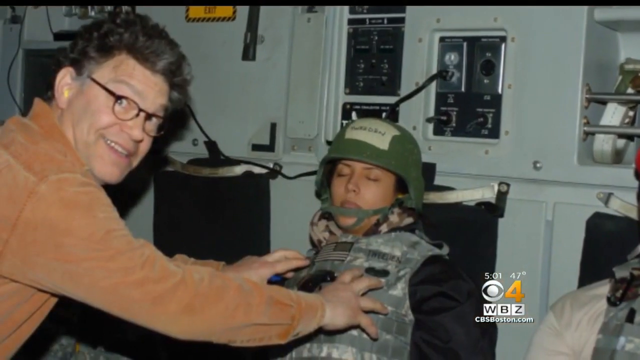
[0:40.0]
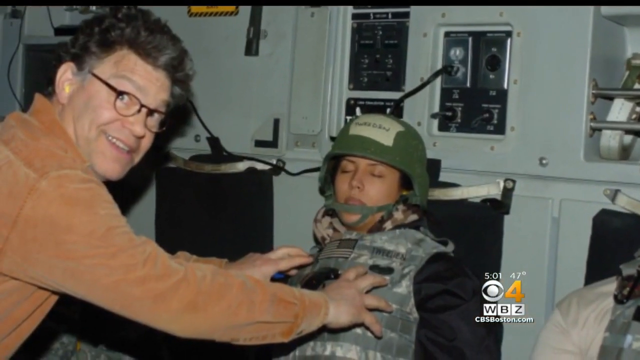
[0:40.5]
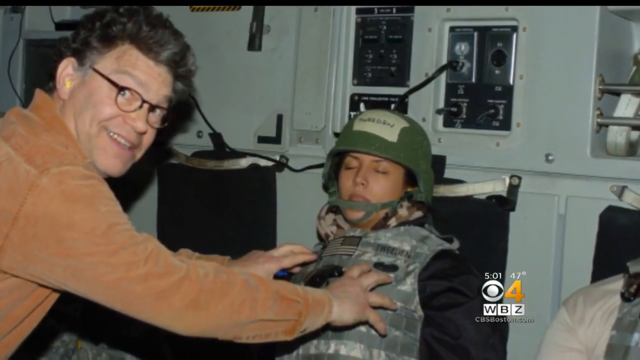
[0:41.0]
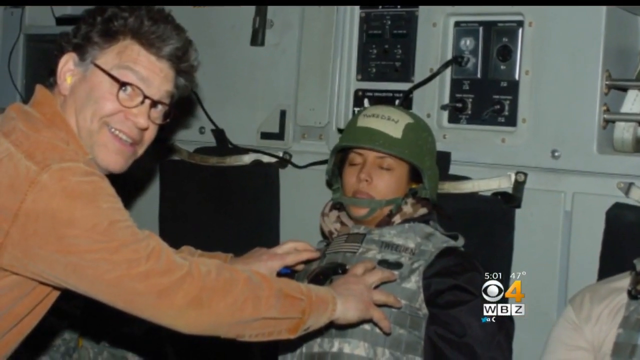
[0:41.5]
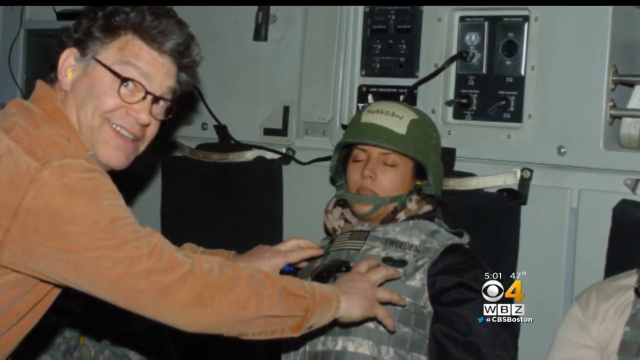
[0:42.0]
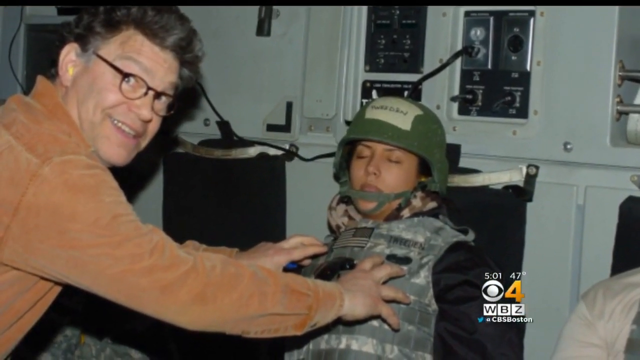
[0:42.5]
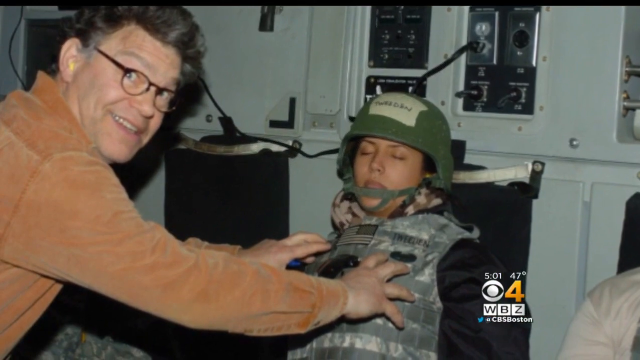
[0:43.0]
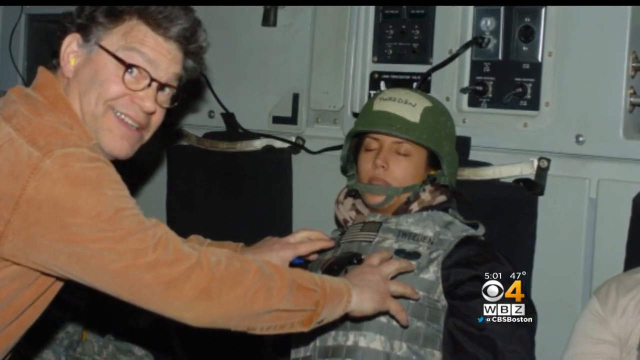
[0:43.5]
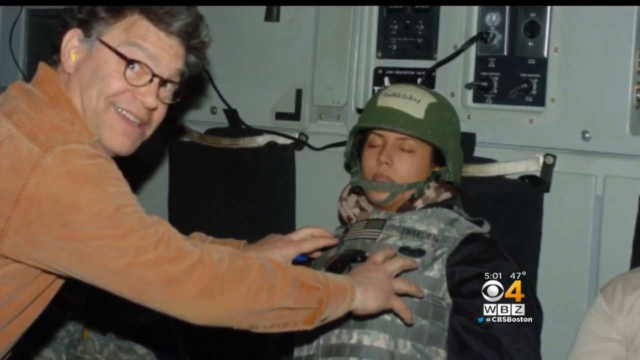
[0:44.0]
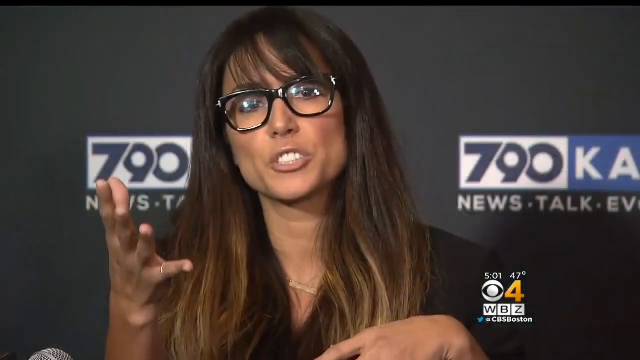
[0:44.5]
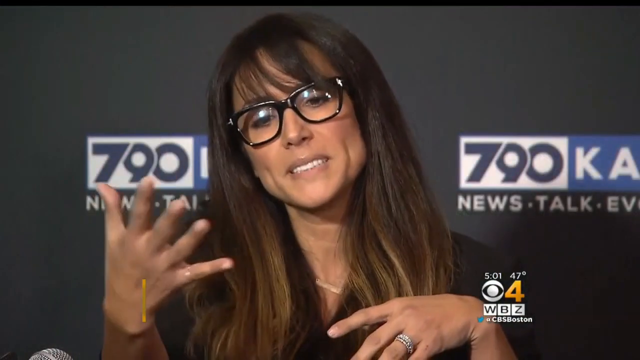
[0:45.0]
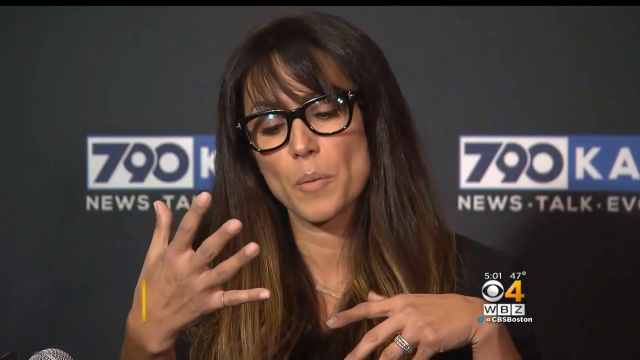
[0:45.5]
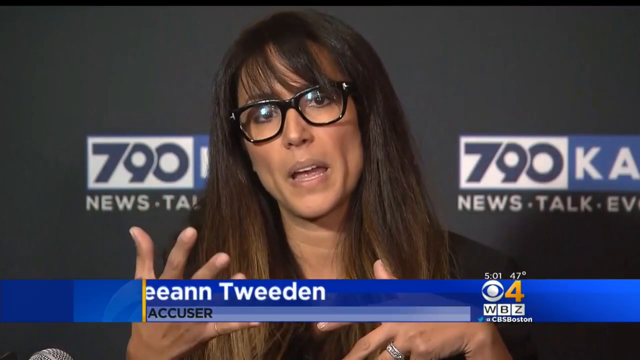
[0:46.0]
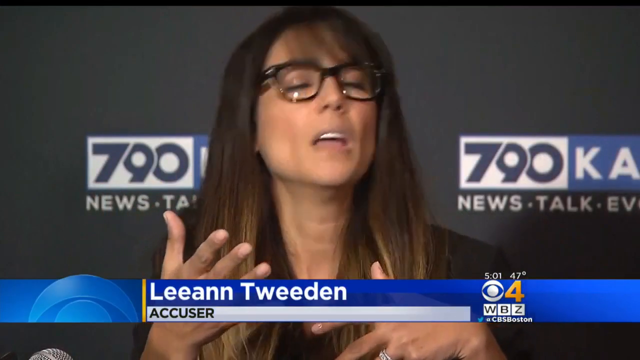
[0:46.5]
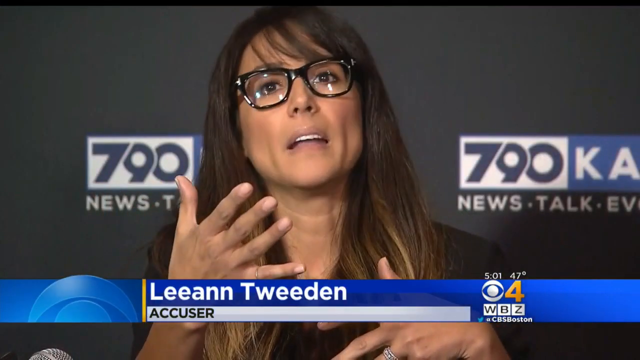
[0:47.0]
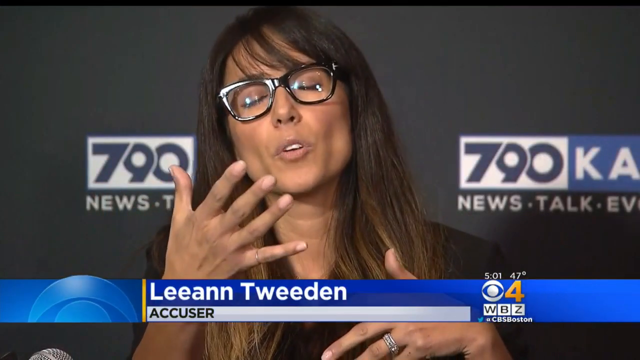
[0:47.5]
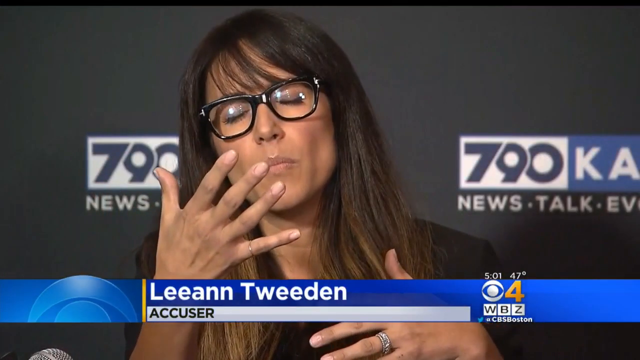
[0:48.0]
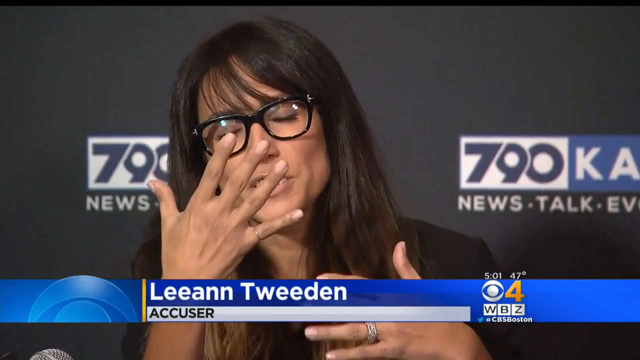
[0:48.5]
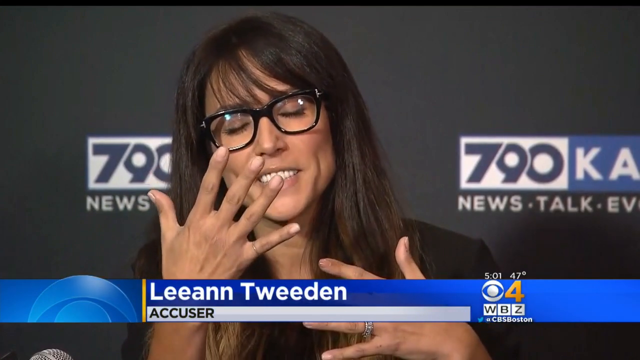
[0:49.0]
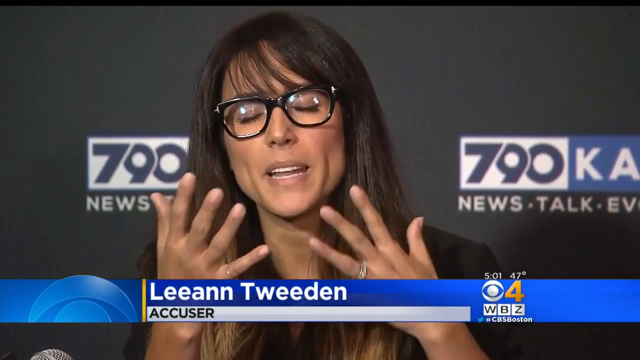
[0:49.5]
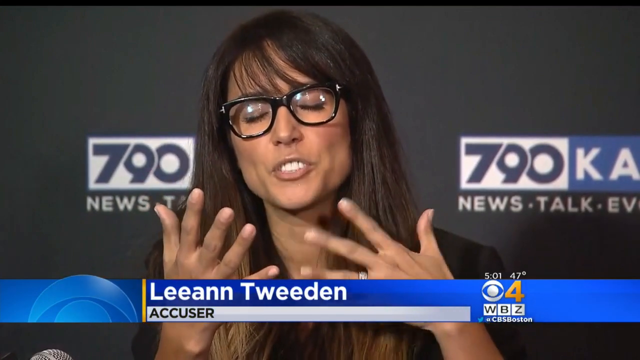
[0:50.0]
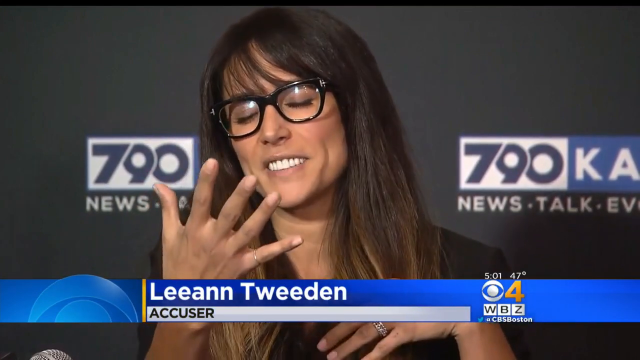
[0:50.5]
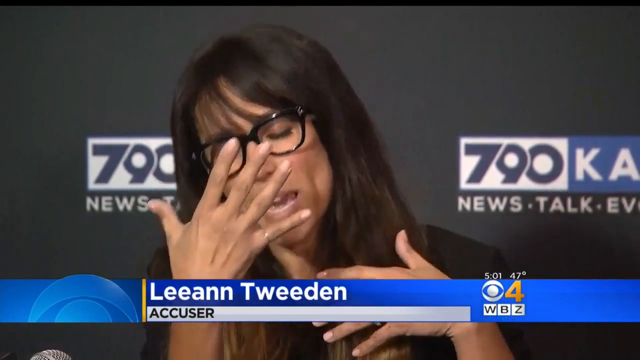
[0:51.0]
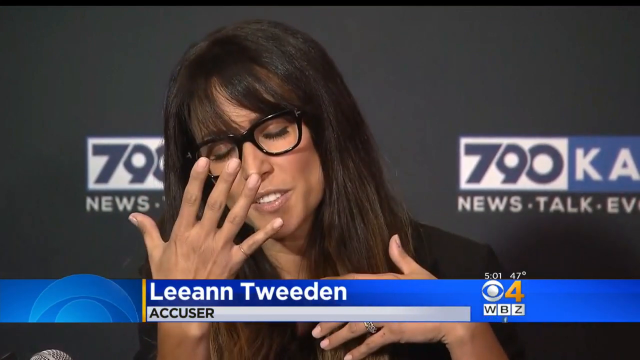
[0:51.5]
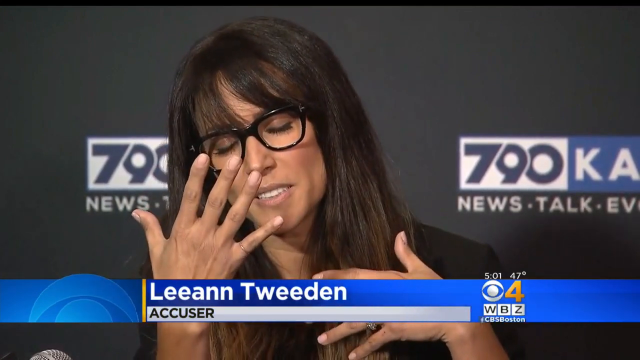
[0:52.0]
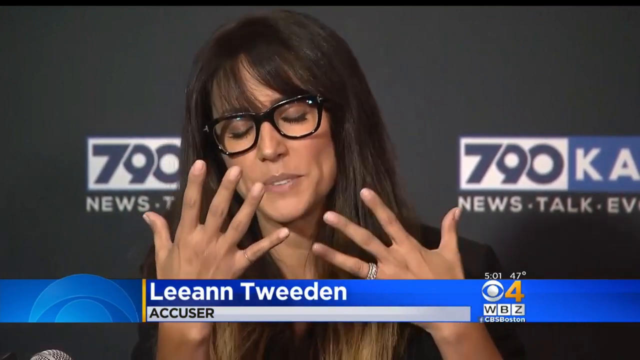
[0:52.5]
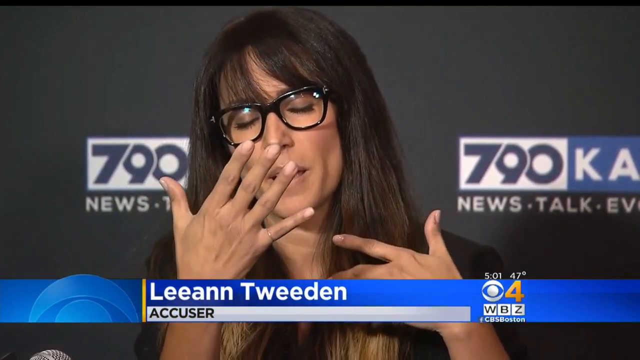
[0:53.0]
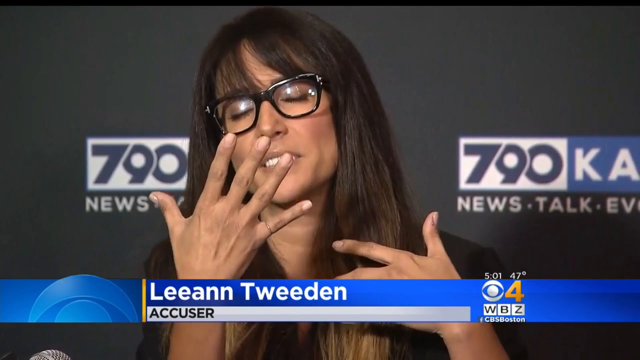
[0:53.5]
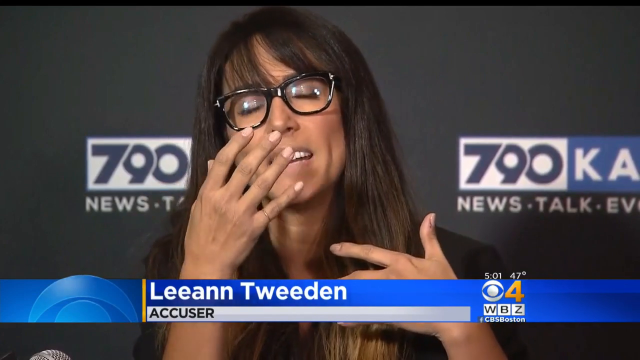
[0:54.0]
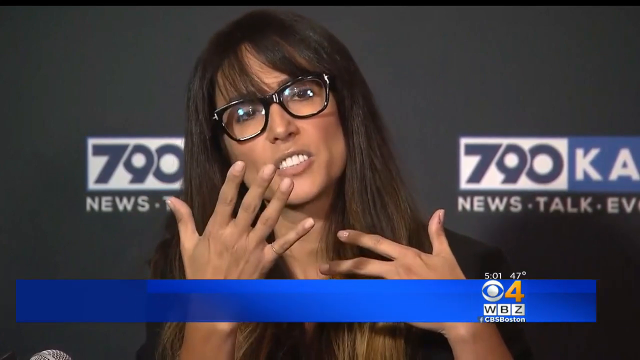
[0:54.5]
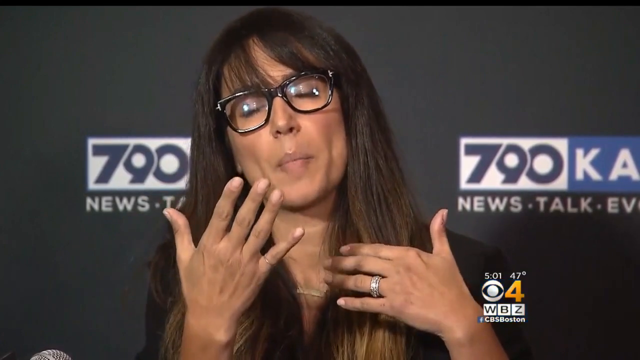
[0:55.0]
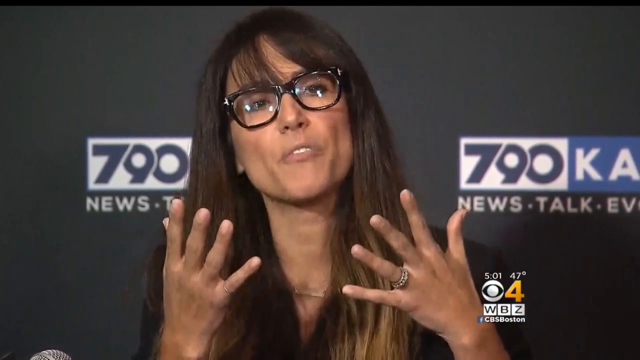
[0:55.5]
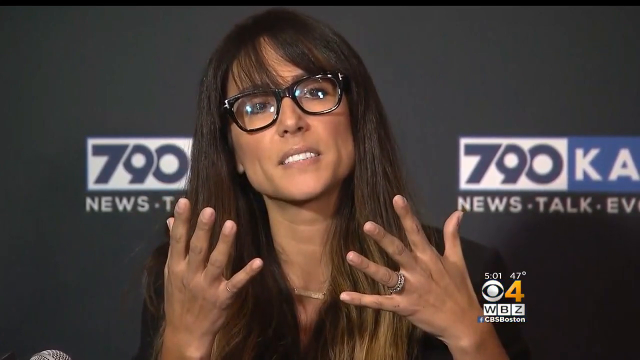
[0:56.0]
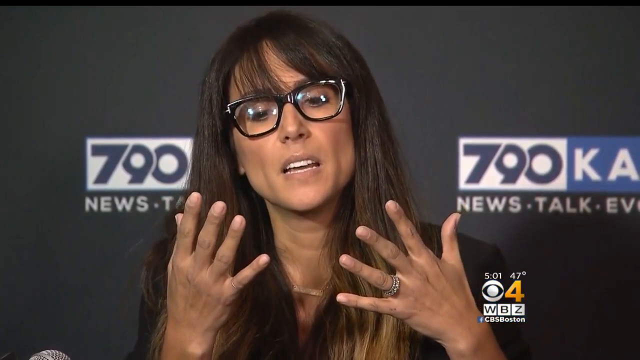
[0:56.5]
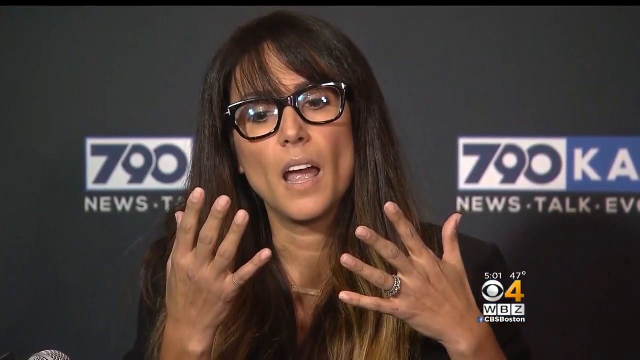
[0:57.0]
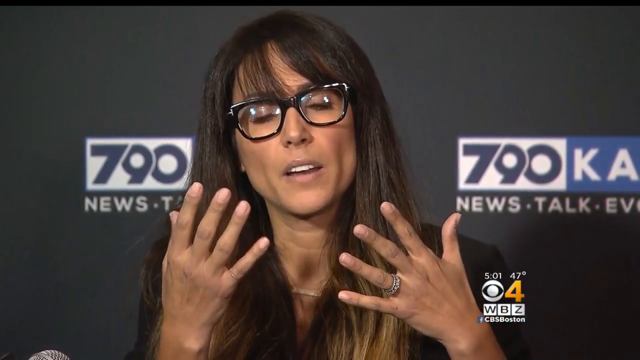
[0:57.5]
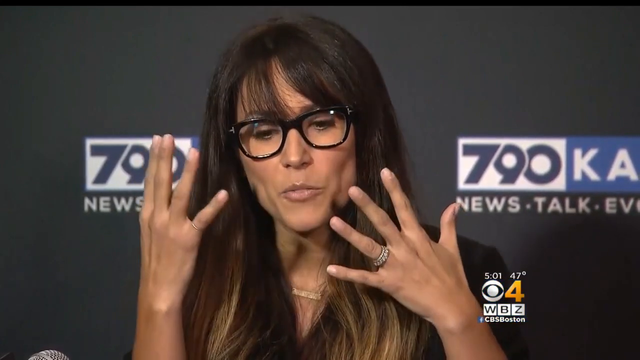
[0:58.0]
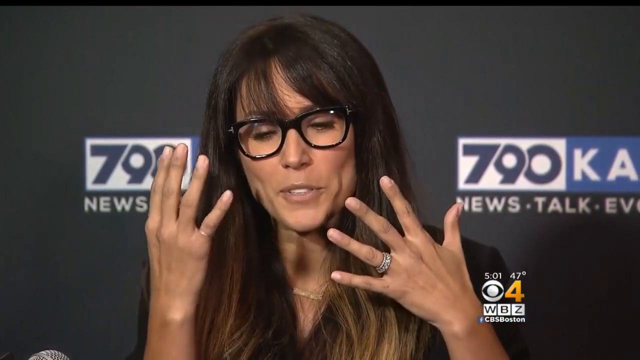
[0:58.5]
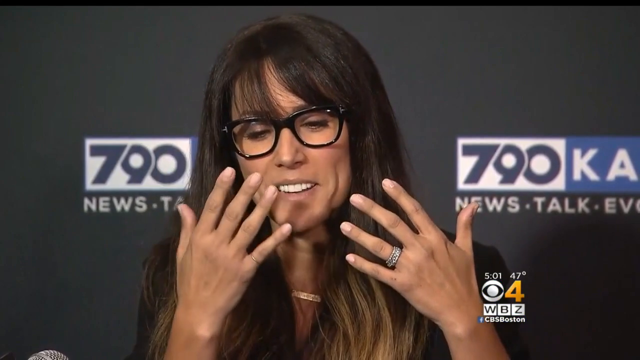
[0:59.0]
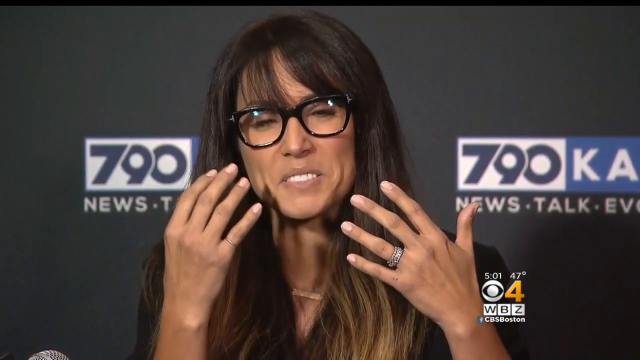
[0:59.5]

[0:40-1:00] In the bottom right corner of the screen, the time is 5.01, the temperature is 47 degrees, and the logo shows WBZ CBS Boston, Channel 4. On the left of the screen, Al Franken is shown groping the breasts of a US military woman over her uniform while she seems to be sleeping, smiling towards the camera as he does it. The video cuts to an interview or press conference with the accuser, Leeann Tweeden, a middle-aged, light brown-skinned woman with long brown hair and glasses, wearing an all-black outfit with a black blazer. As she speaks, she moves her hands almost towards her face, gestures a lot, and closes her eyes quite a few times. The 790 KABC logo is on the black wall behind her. Her lips move as she speaks, revealing very white, straight teeth.